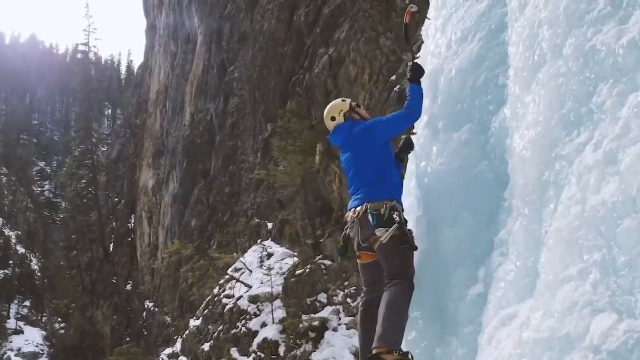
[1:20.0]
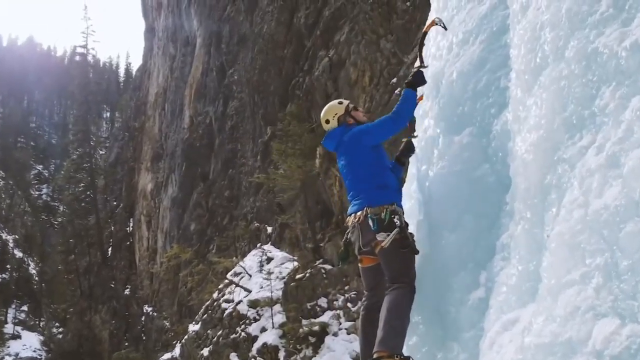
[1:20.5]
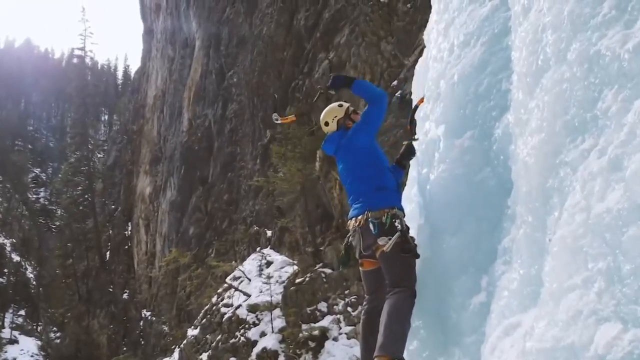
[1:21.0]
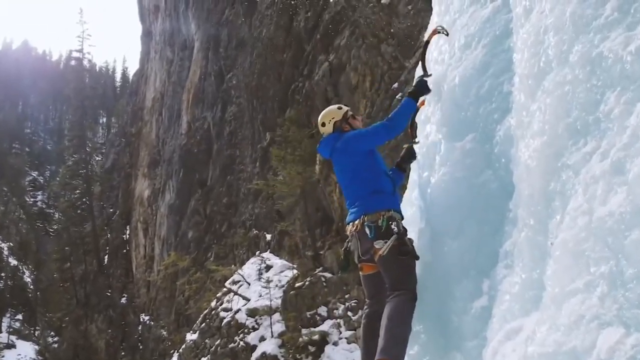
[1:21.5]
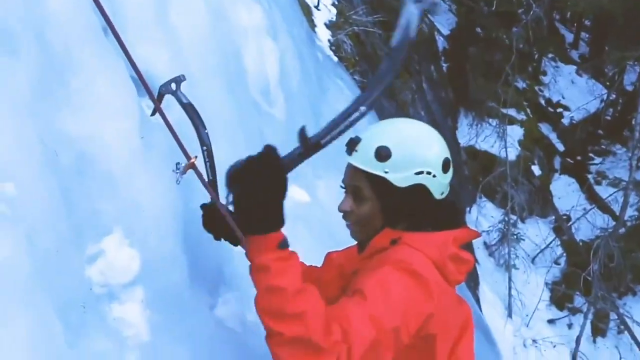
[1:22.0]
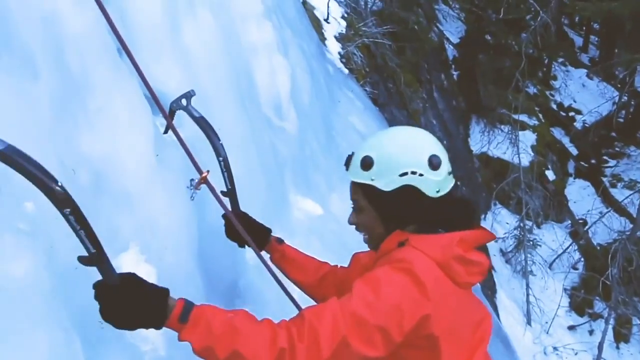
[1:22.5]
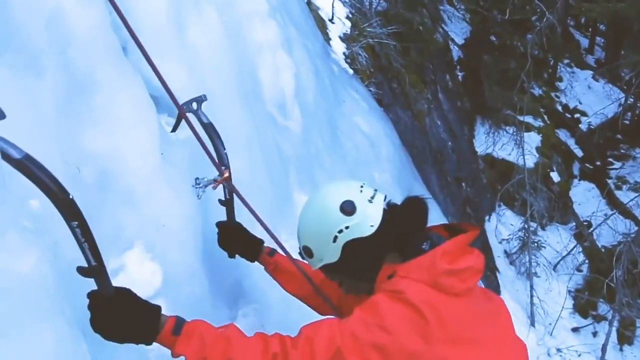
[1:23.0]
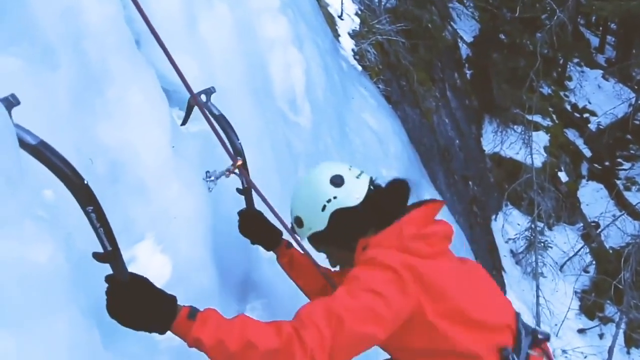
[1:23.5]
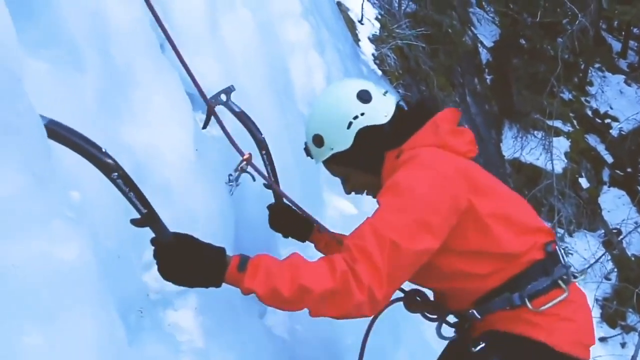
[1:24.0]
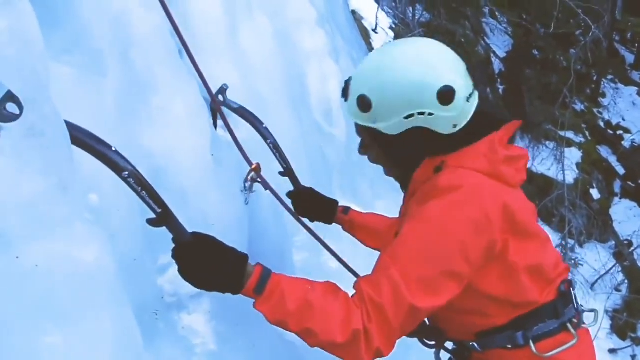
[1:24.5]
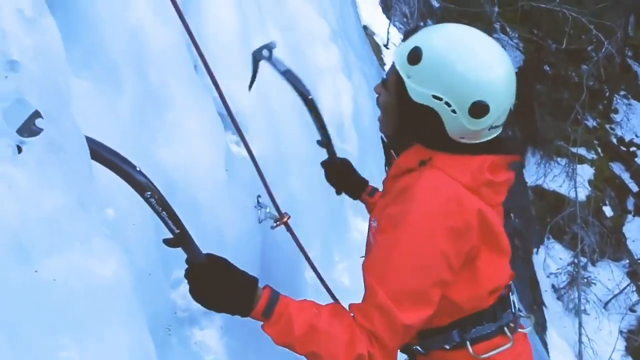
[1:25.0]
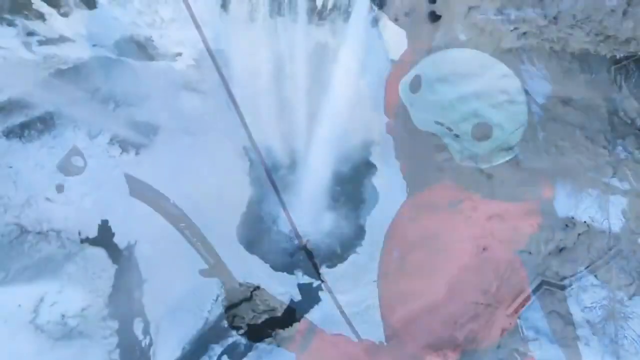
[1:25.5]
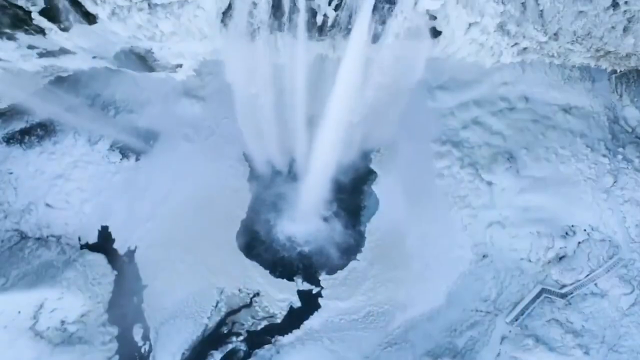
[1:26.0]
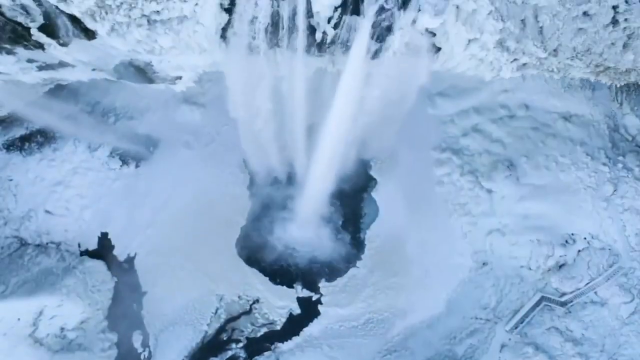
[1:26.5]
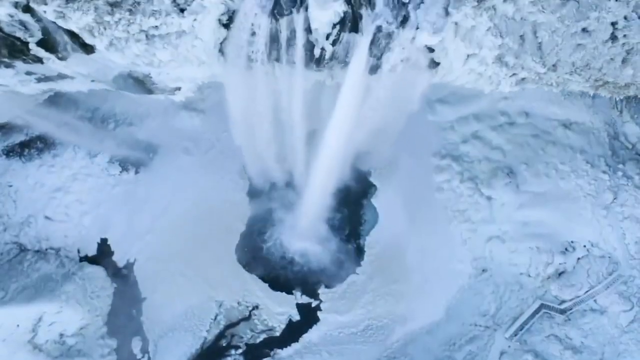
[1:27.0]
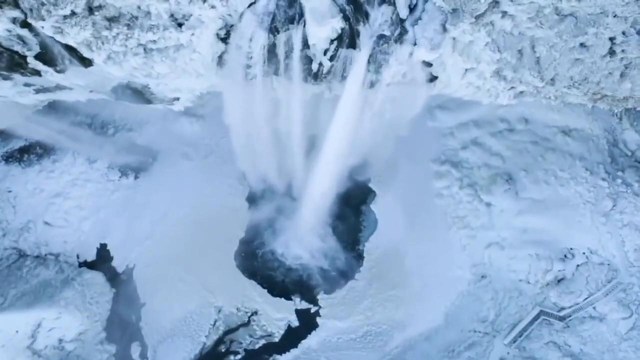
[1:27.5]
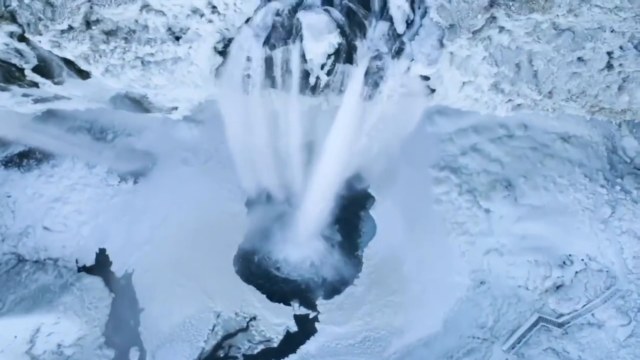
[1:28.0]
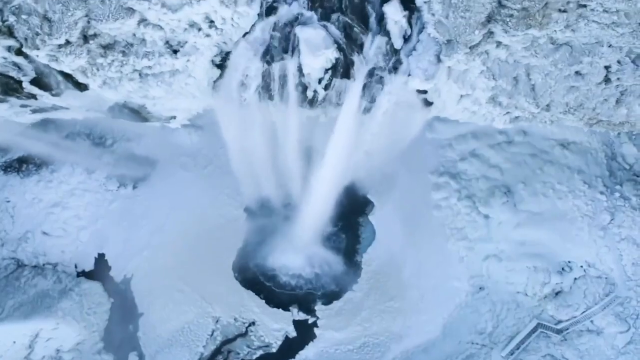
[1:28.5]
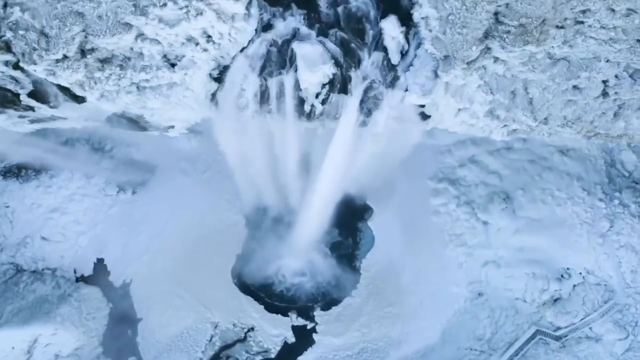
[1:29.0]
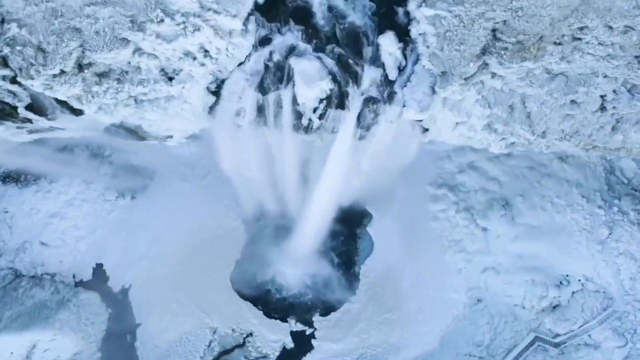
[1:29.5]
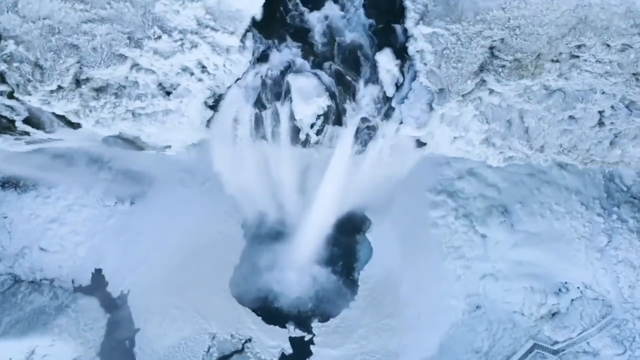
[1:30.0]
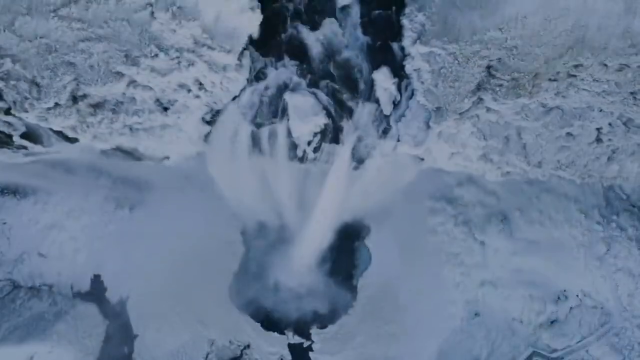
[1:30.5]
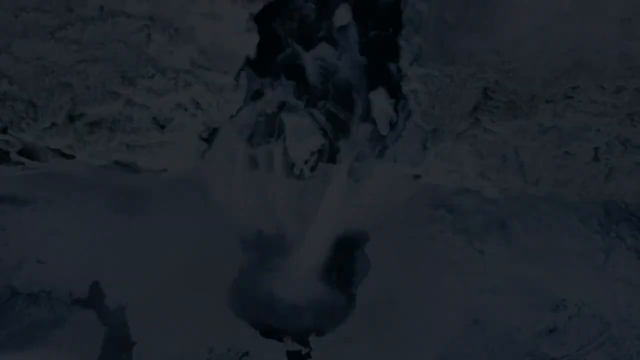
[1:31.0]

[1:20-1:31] The man in a blue jersey, a yellow helmet and brown pants holds a grip in his hand, trying to stab the ice so his tool can catch a grip. The next shot shows a woman in a bright red-orange jacket with two gripping tools in her hands; she wears a white helmet, has a rope tied on her, and is gripping on the ice. The video then shows a top view of the pond, with the waterfall falling down towards a hole in the icy river below.